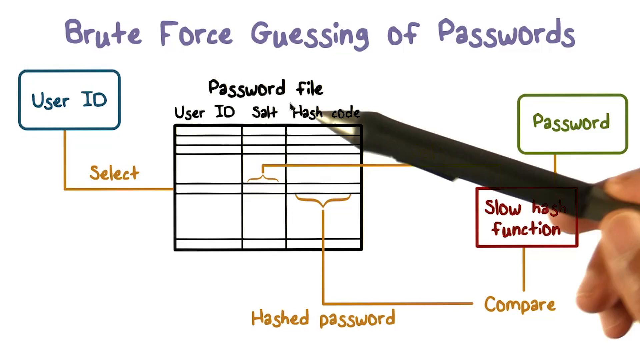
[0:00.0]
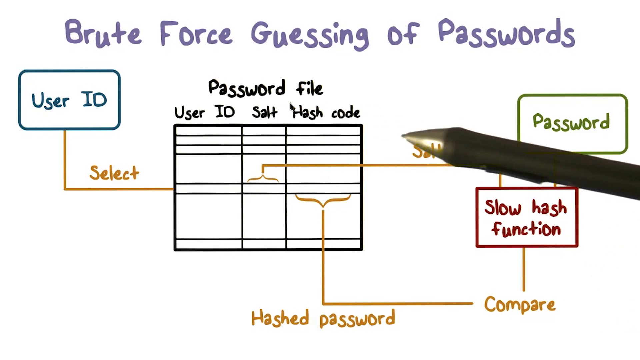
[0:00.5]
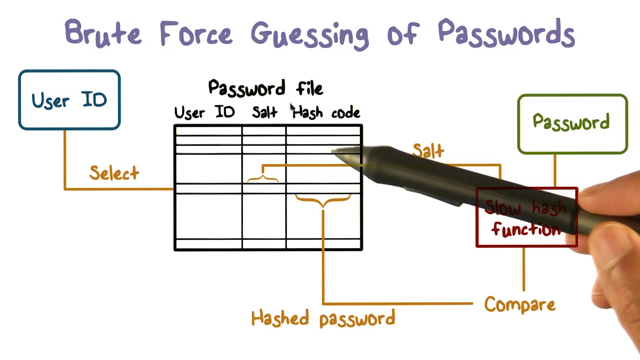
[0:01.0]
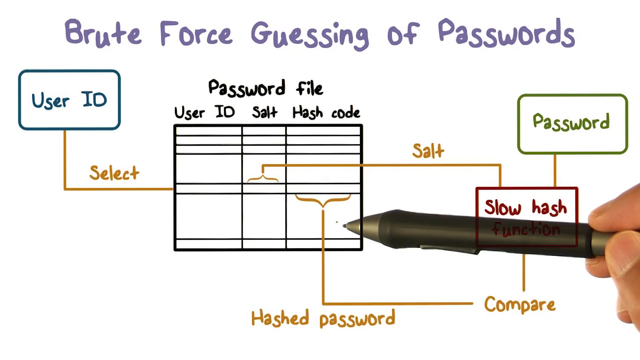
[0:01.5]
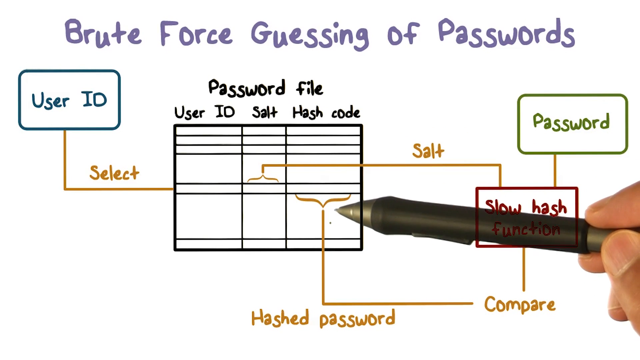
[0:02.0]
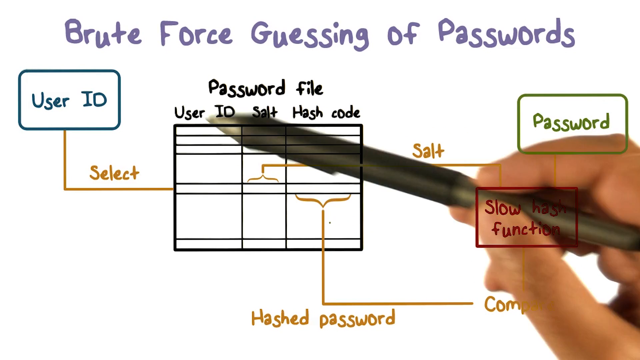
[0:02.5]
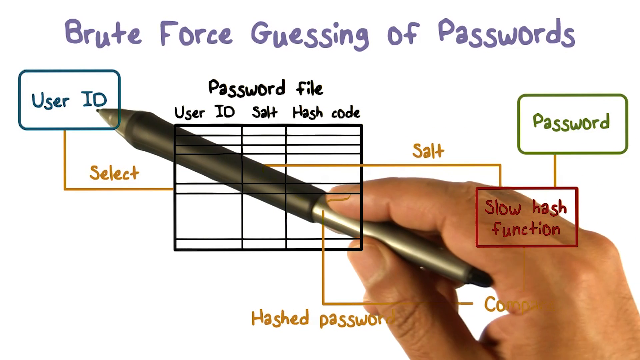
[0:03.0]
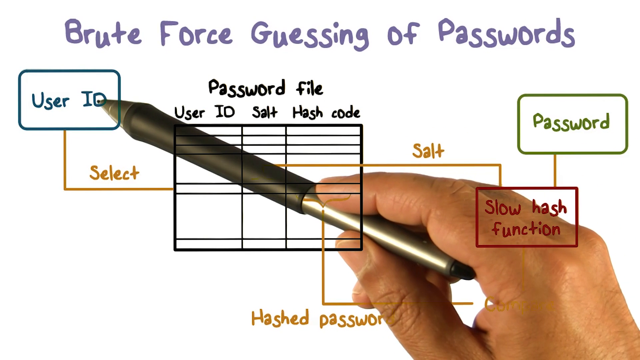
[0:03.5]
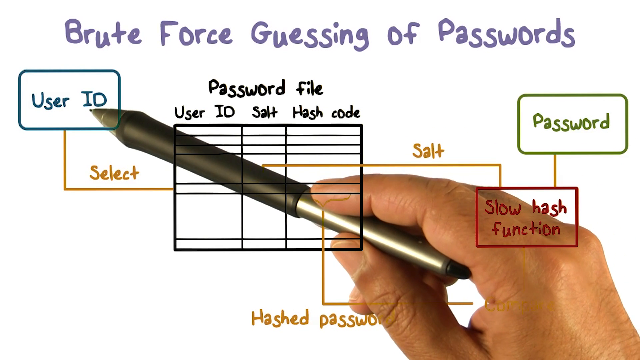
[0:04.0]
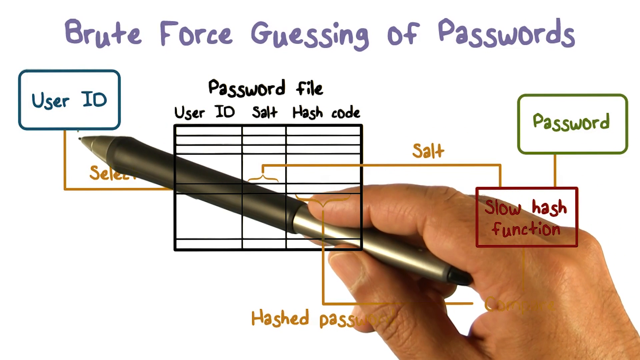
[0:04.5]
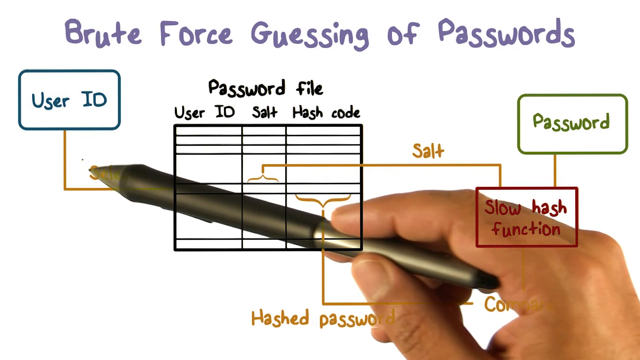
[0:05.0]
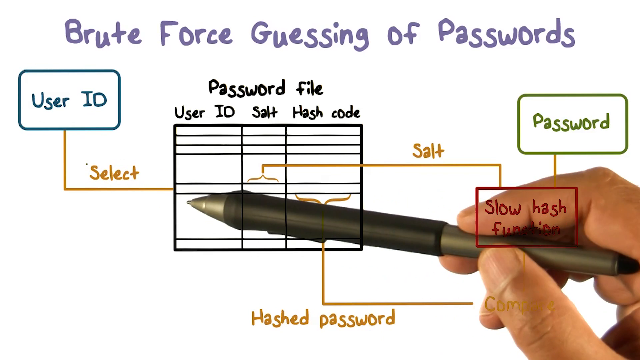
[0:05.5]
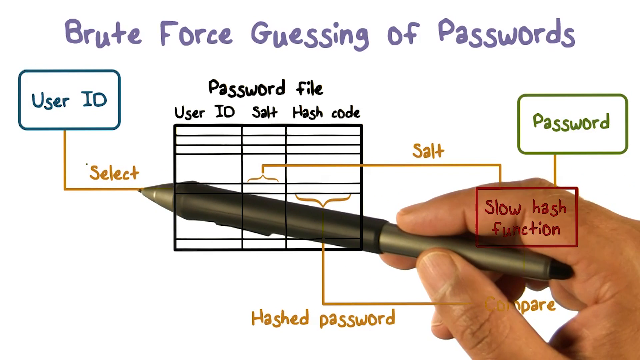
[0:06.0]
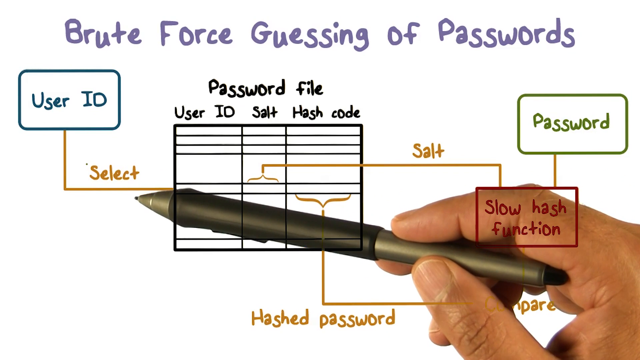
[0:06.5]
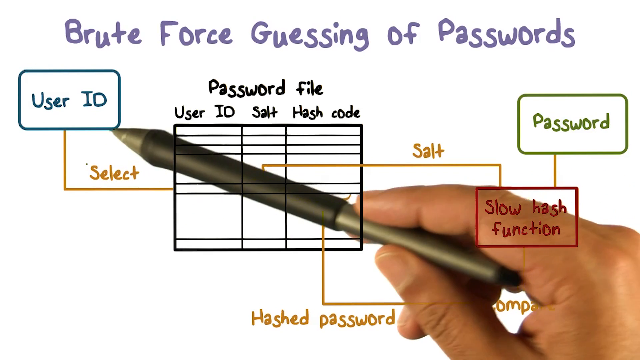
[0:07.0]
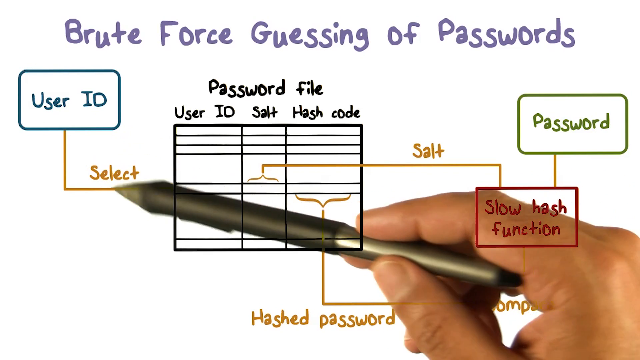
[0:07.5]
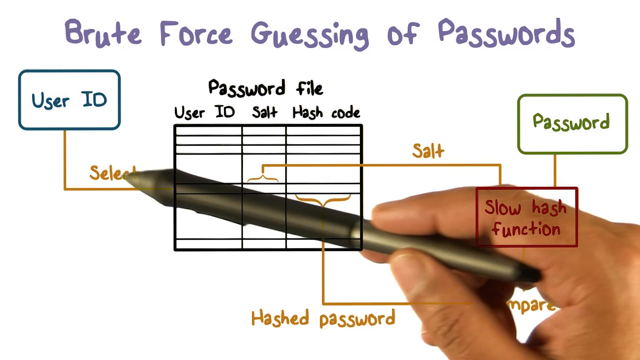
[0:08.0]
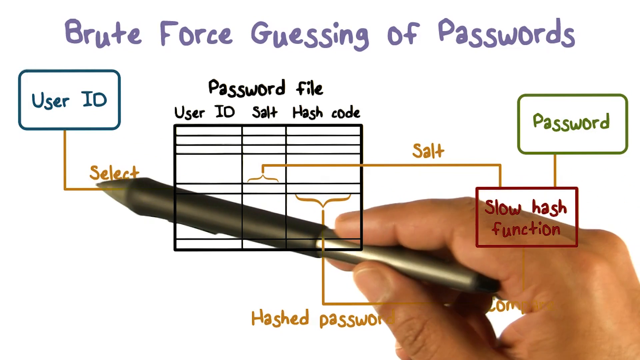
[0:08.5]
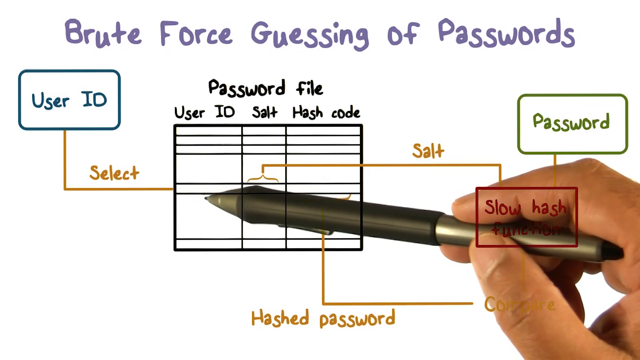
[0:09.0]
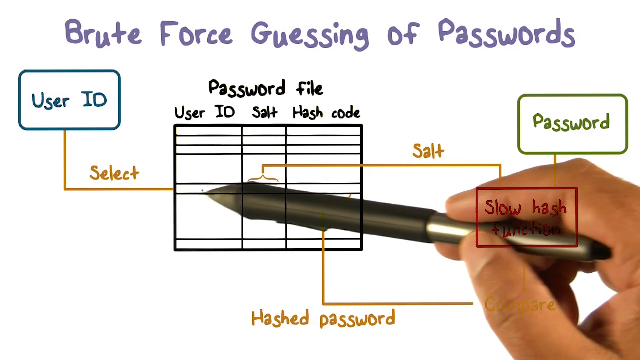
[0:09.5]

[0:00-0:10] A presentation screen is titled "Brute Force Guessing of Passwords." In the center left of the screen is a blank data table titled "Password File" with three columns: "user ID" in the first, a second column that apparently reads "sal" plus or perhaps "salt," and "hash code" in the third. The table has seven rows; the fourth and sixth rows are a lot wider than the remaining rows, which are all the same height. The first column has a call-out box that also says "user ID," with the word "select" on the line pointing toward that column. The second column has a call-out box connected by a line that says "password," and another box says "slow hash function compare." The last column, titled hash code, has a call-out box with an arrow that says "hash password." It is set up like a flowchart. A hand holding a pen is over the screen, showing how the flow of information would go through the chart to guess passwords; the data from the second and third columns apparently connect to the slow hash function and are compared, following the direction indicated by the pen.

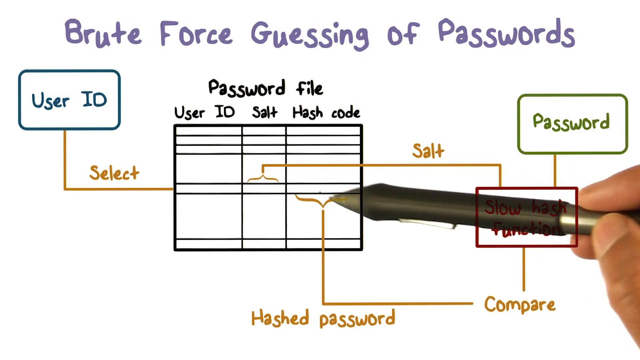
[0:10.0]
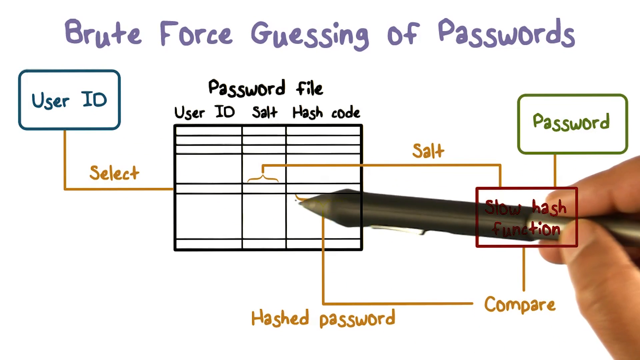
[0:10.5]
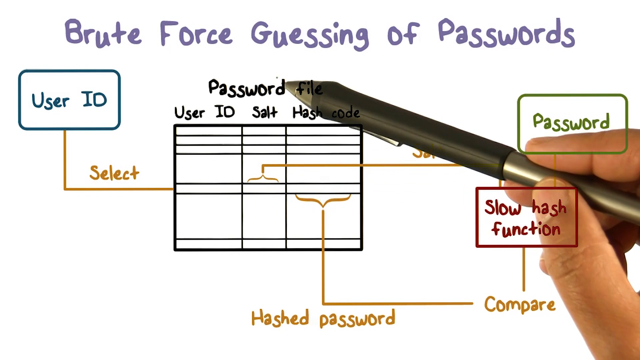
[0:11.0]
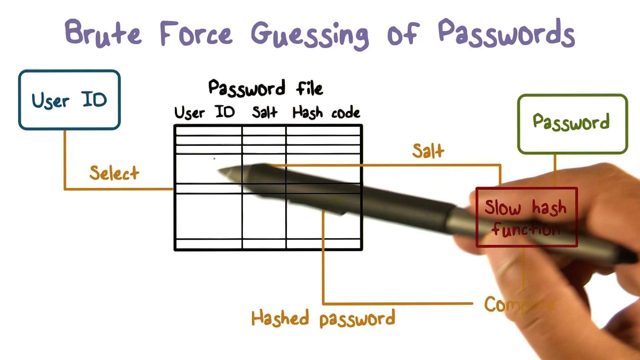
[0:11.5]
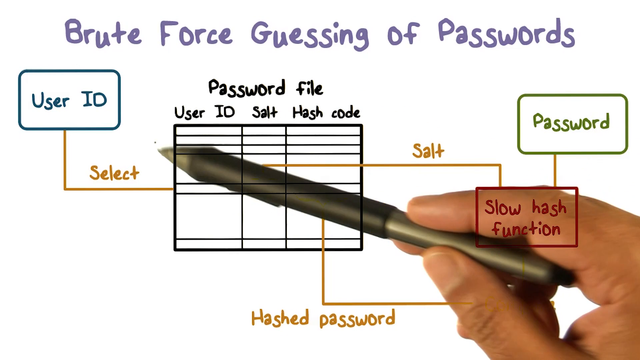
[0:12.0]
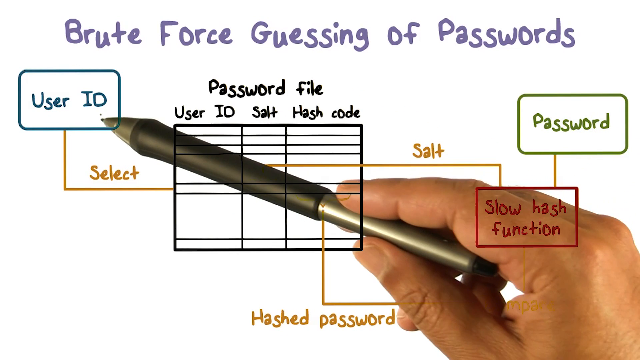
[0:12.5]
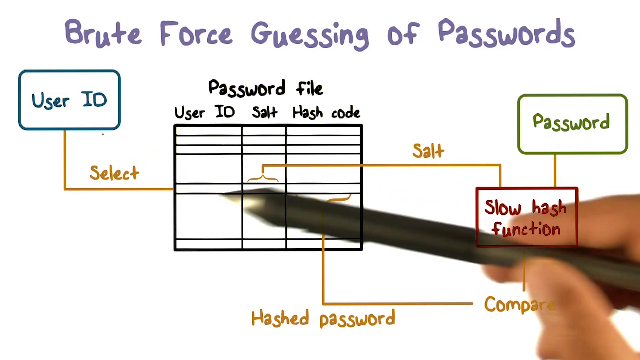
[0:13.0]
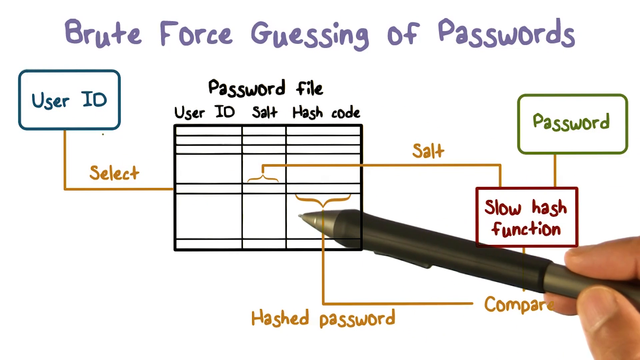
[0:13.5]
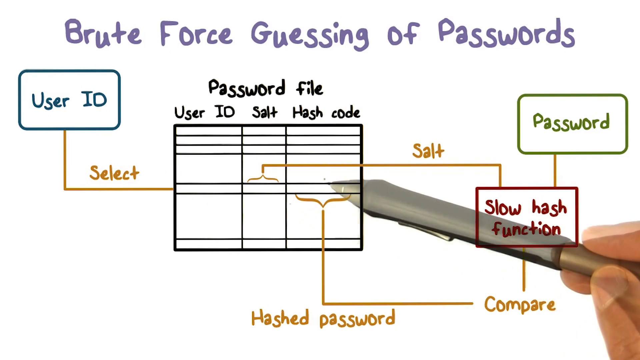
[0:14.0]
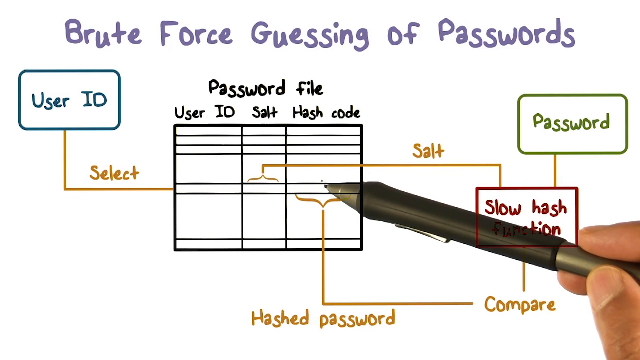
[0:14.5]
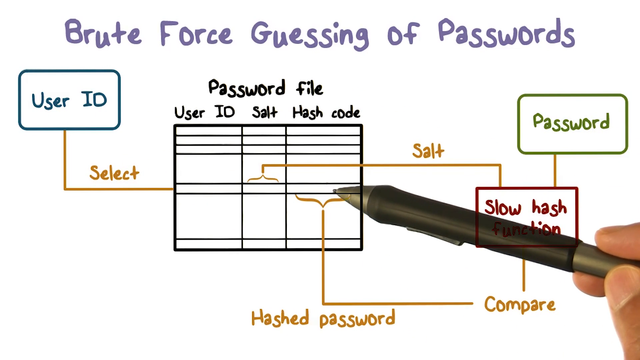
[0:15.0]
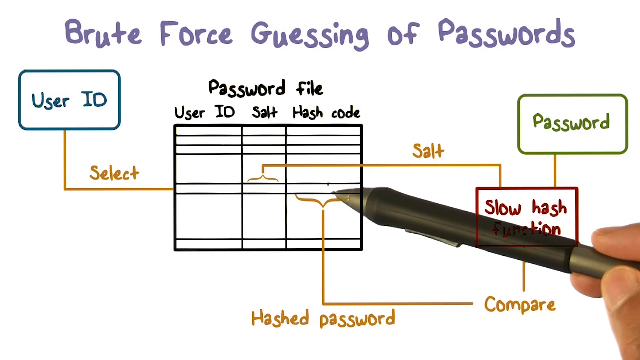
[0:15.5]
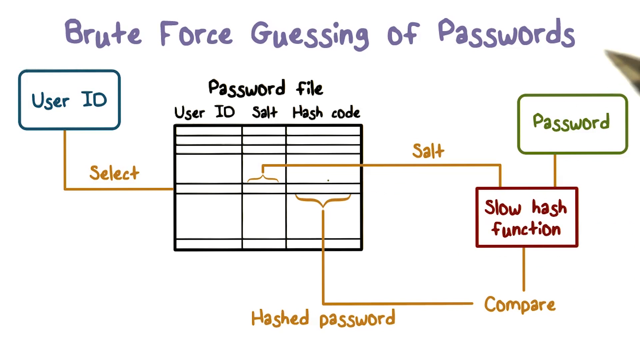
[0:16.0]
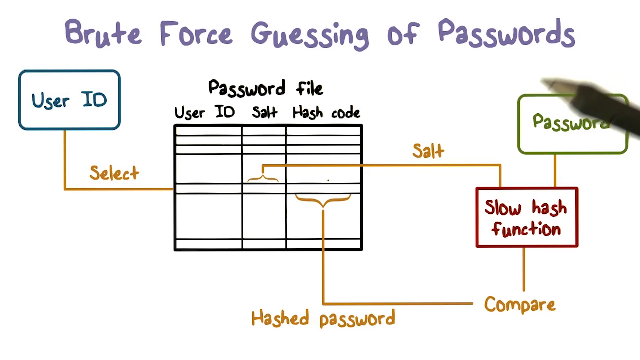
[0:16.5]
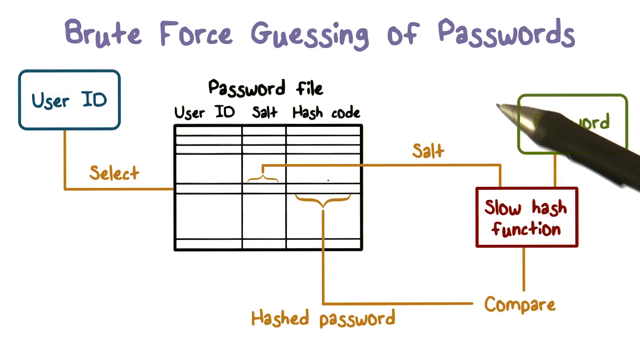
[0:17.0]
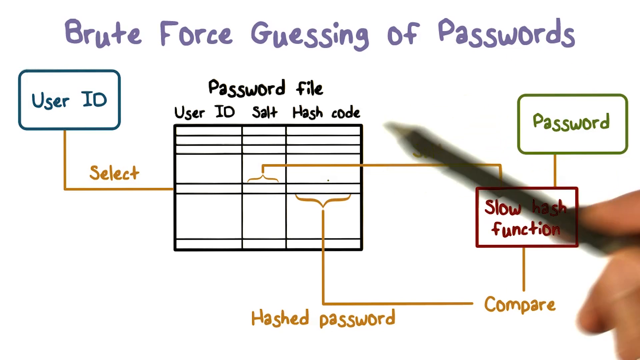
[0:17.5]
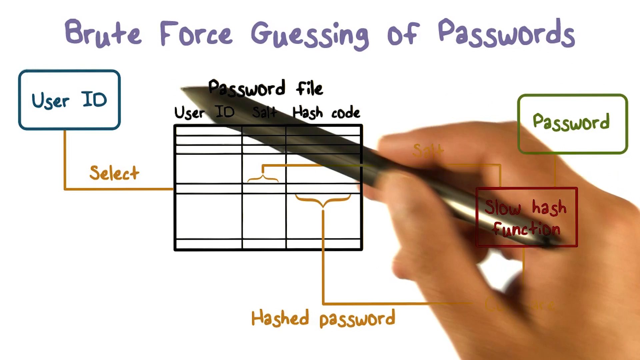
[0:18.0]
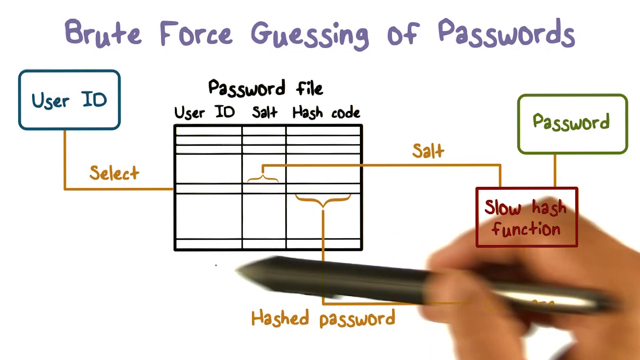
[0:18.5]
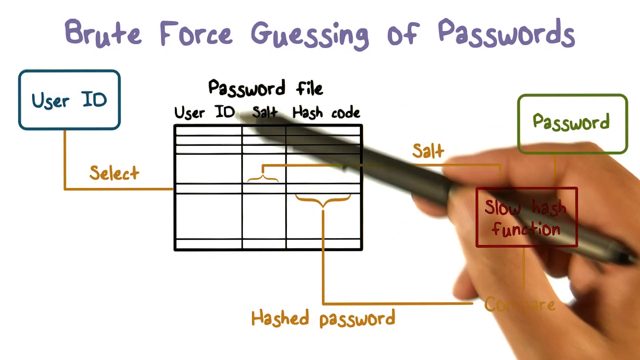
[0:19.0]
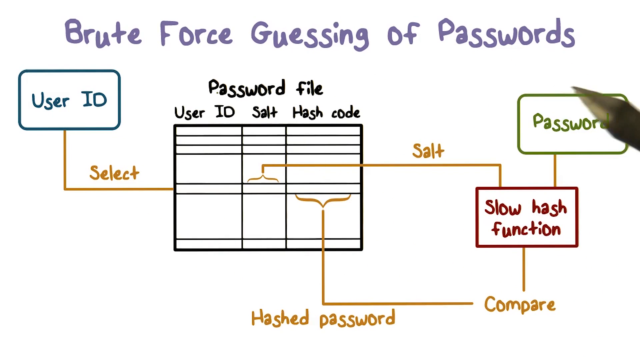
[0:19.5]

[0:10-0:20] The same screen about brute force password guessing shows the empty "Password File" data table. The first column is "user ID," the second column says either "S-A-L" plus or "salt," and the last column says "hash code." The font is a little whimsical, which makes some of the letters challenging to read. A hand holding a pen is overlaid on the screen, showing the direction of the information like a flowchart: the user ID flows into the first column, the middle column flows into the box labeled "slow hash function," and the last column with the hash password is compared to the other one. The output is apparently the actual password.